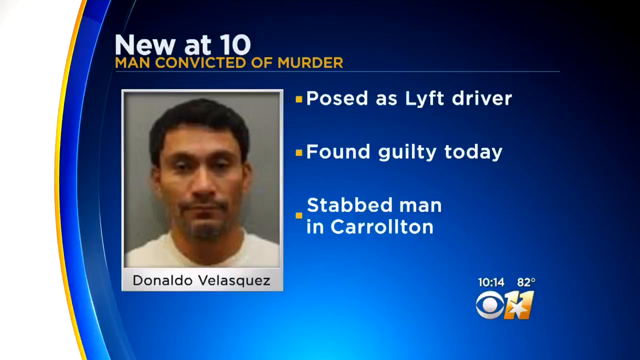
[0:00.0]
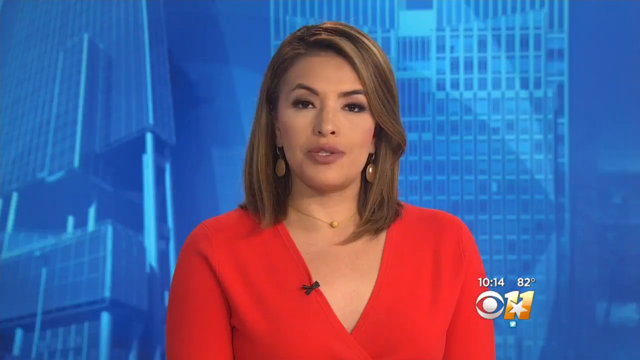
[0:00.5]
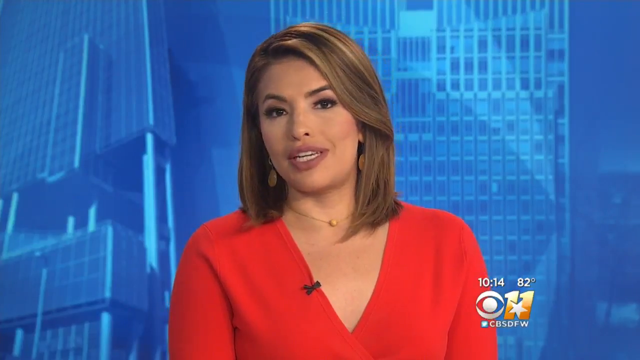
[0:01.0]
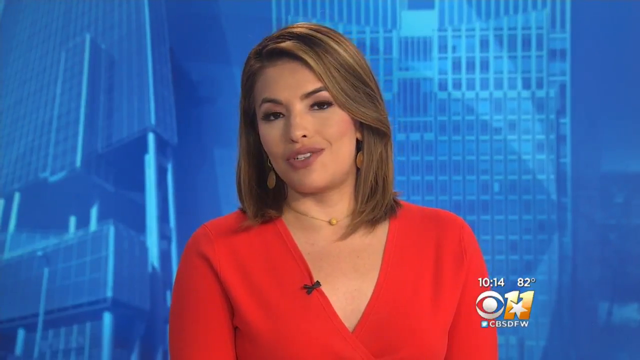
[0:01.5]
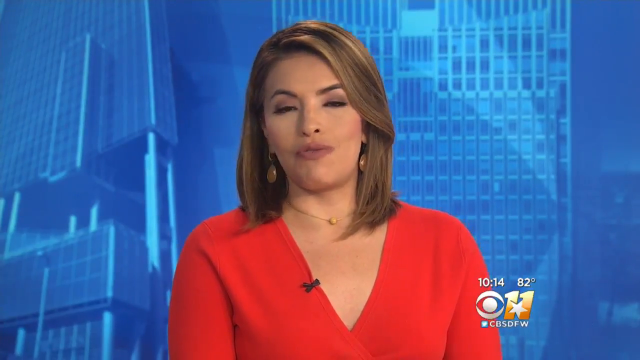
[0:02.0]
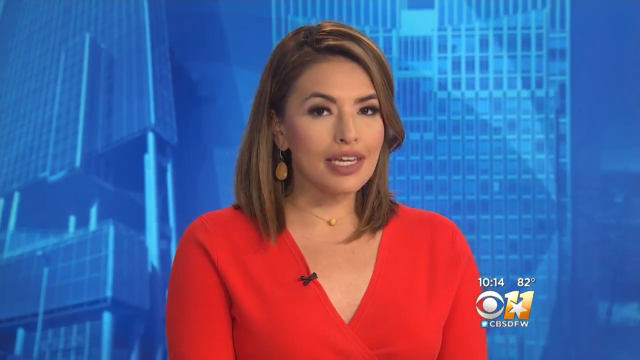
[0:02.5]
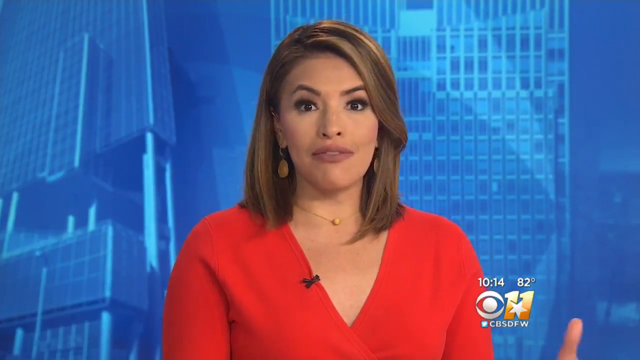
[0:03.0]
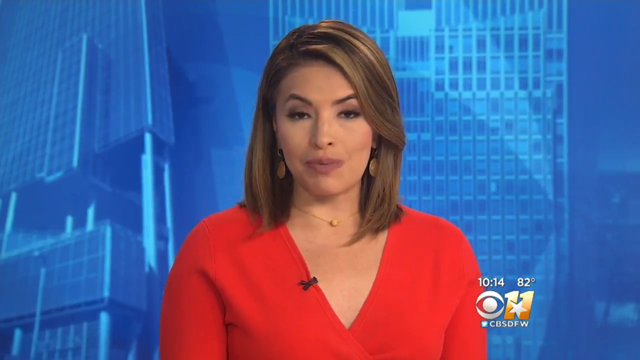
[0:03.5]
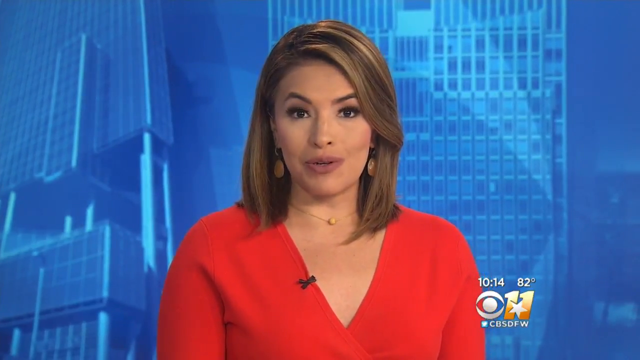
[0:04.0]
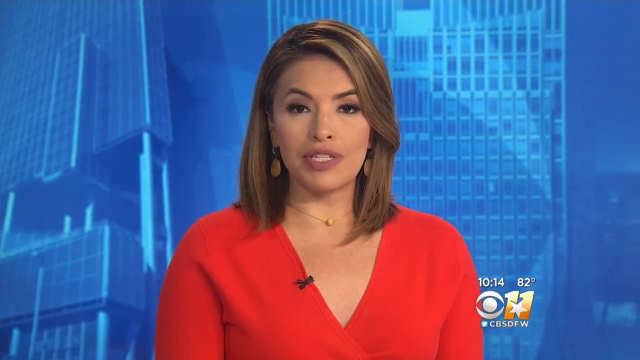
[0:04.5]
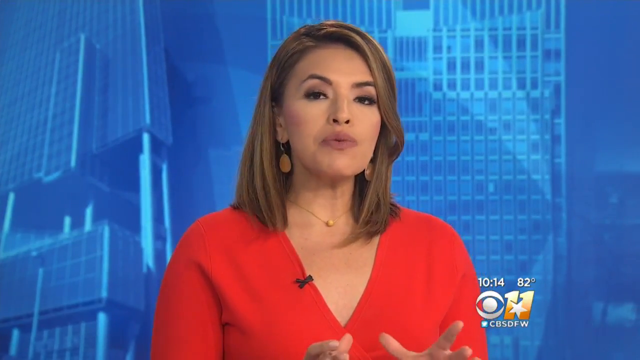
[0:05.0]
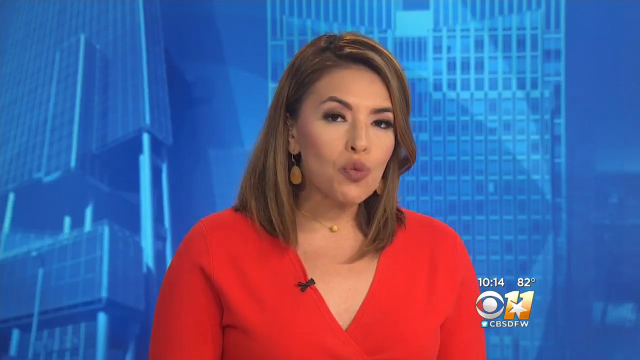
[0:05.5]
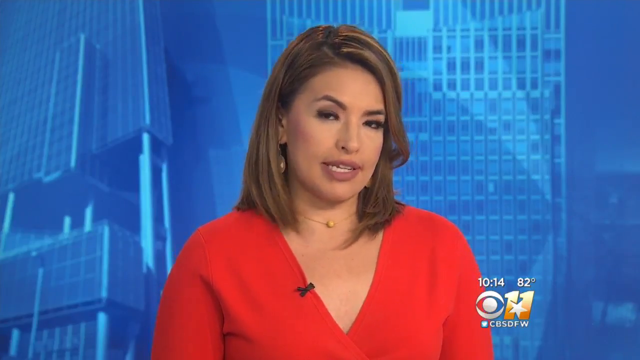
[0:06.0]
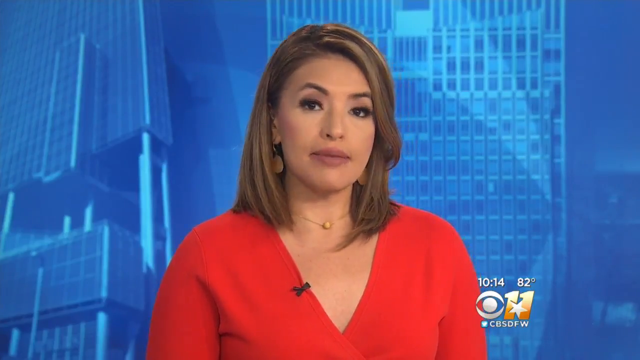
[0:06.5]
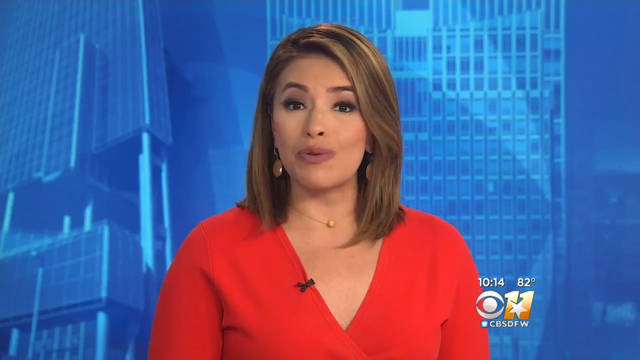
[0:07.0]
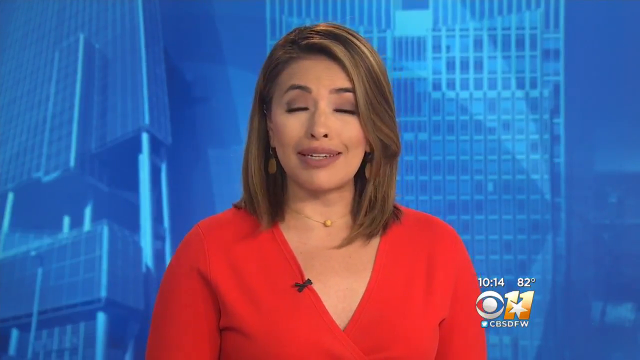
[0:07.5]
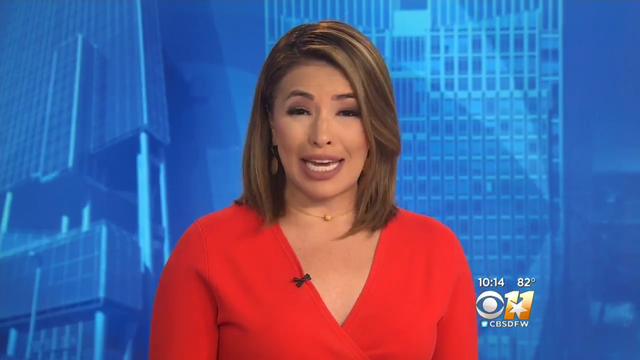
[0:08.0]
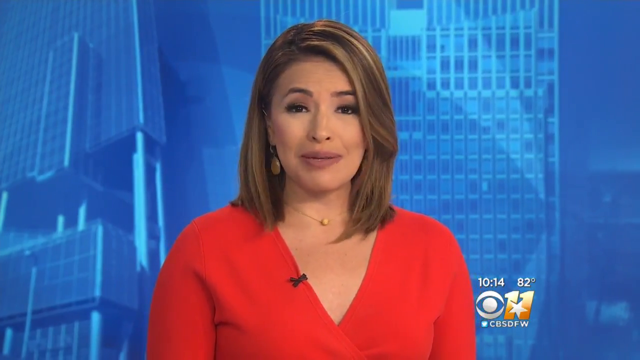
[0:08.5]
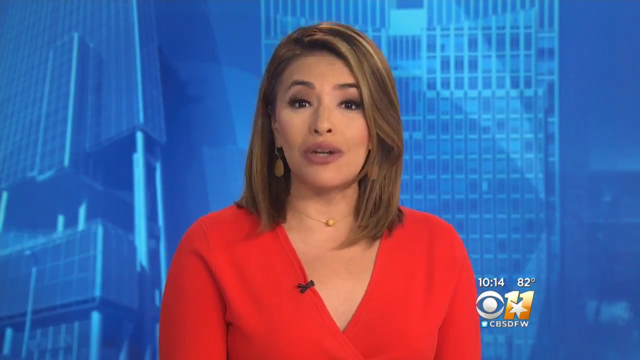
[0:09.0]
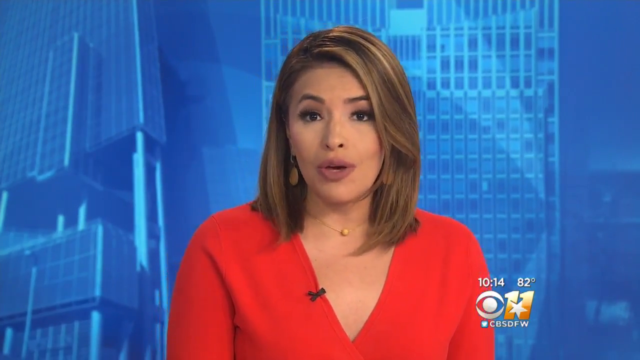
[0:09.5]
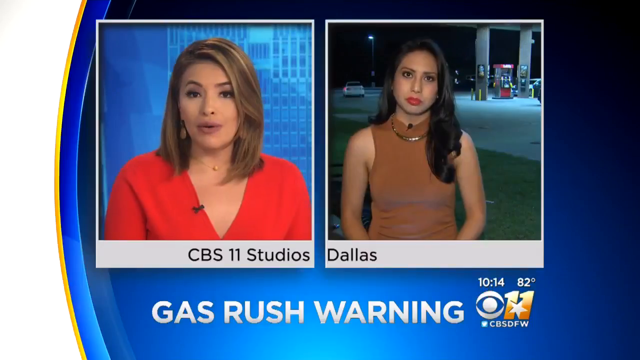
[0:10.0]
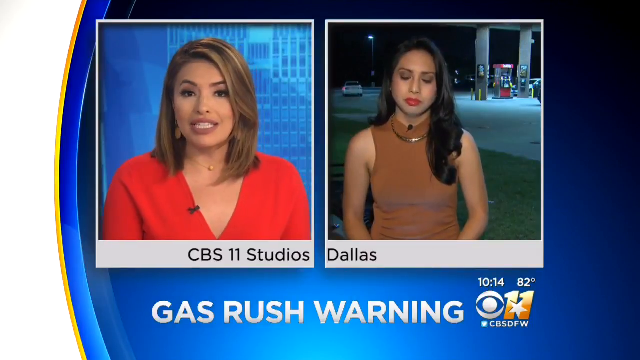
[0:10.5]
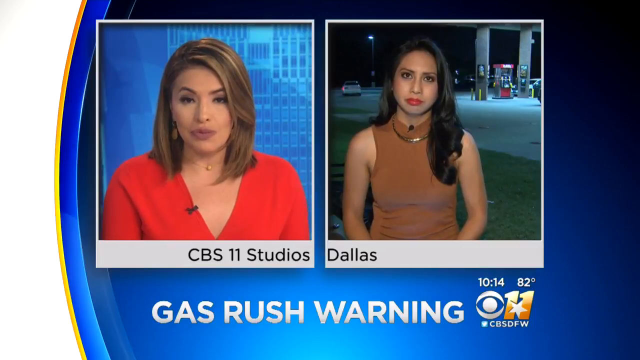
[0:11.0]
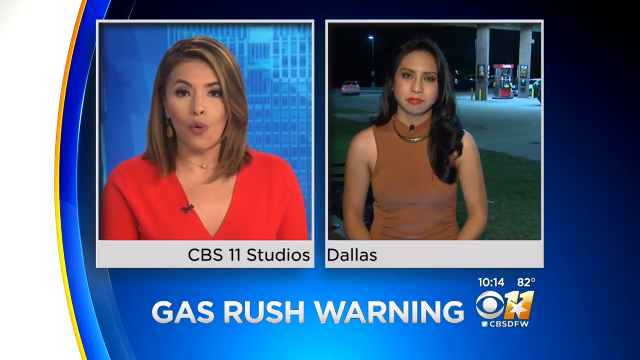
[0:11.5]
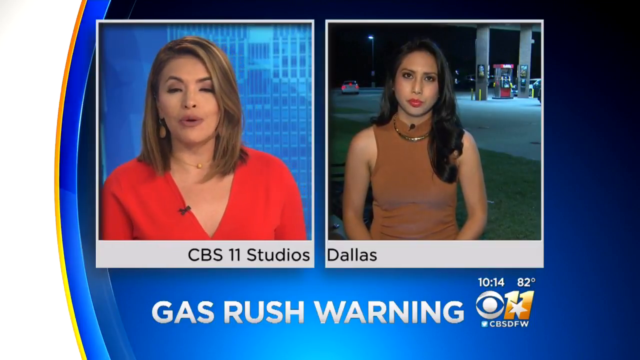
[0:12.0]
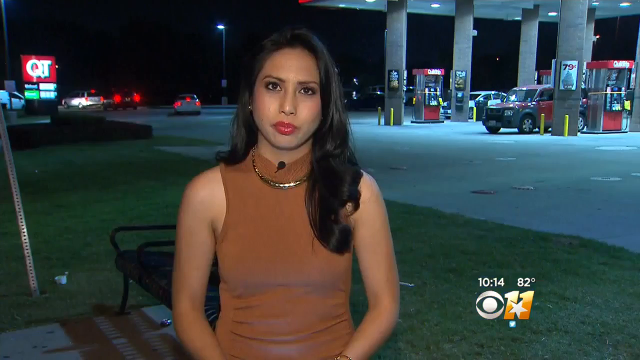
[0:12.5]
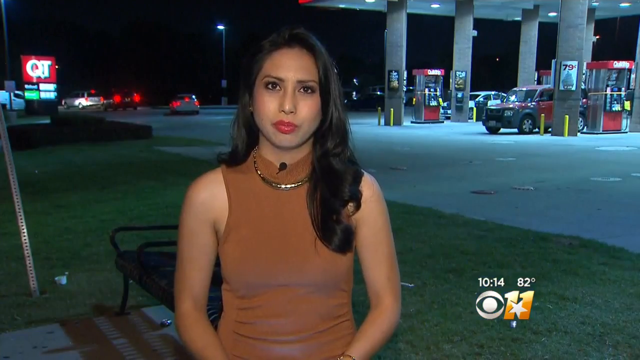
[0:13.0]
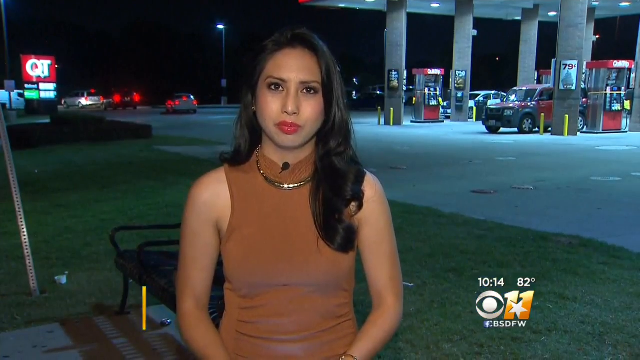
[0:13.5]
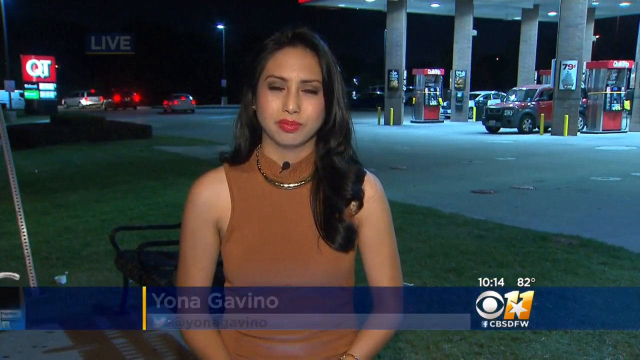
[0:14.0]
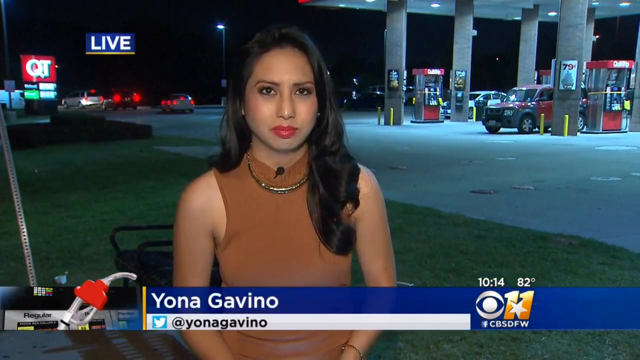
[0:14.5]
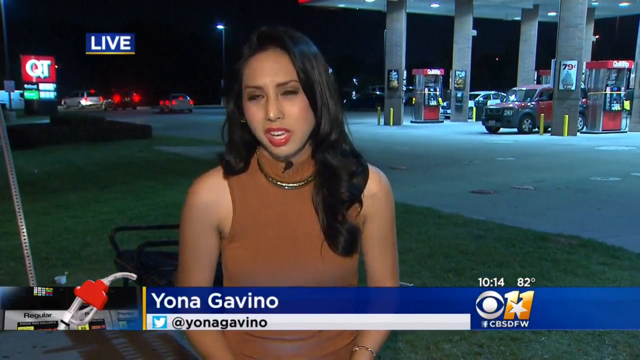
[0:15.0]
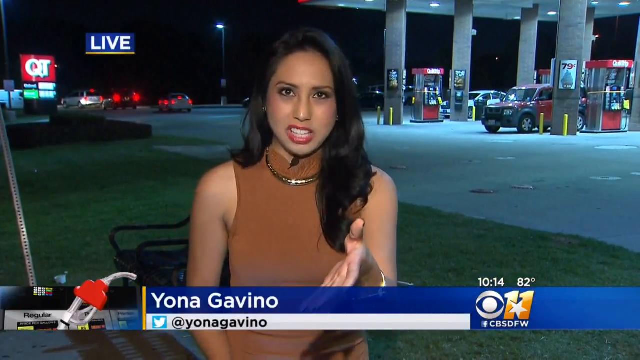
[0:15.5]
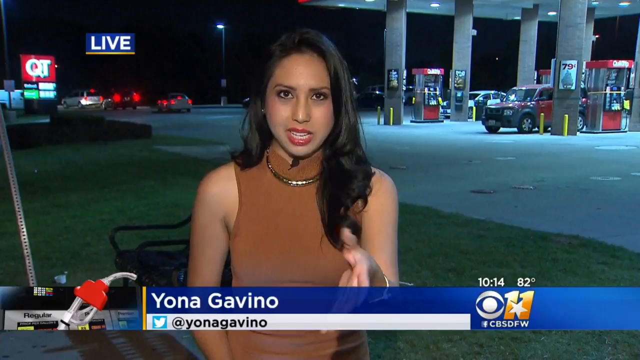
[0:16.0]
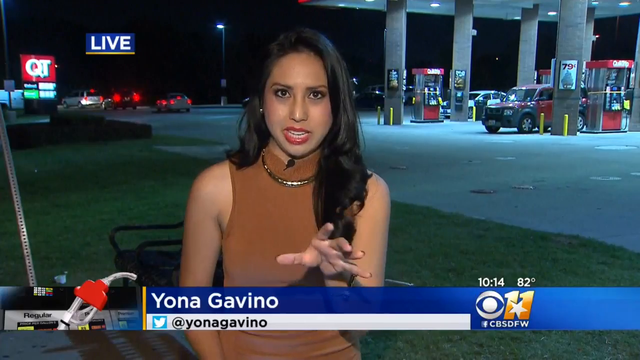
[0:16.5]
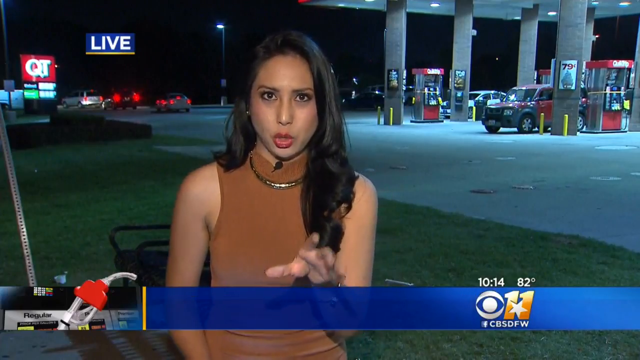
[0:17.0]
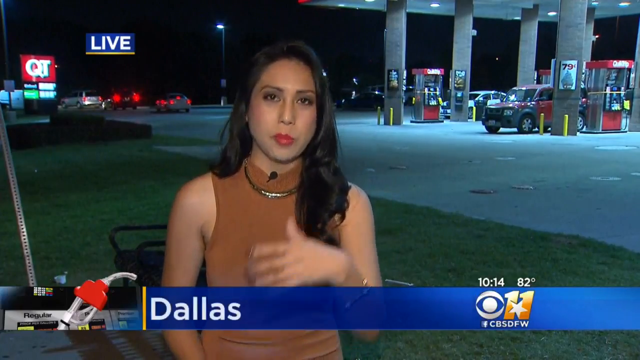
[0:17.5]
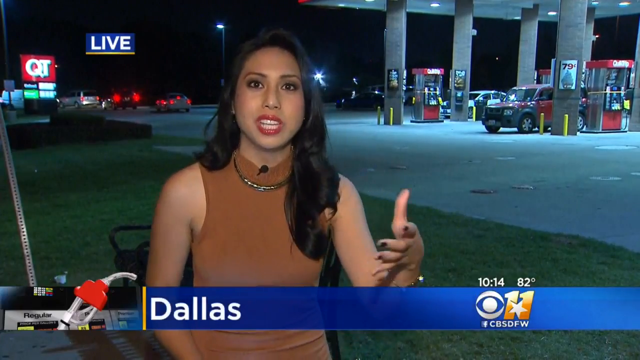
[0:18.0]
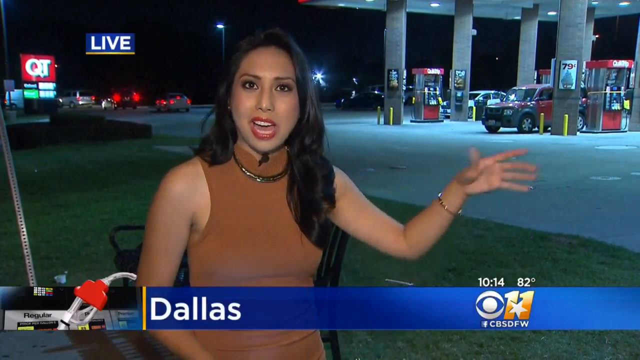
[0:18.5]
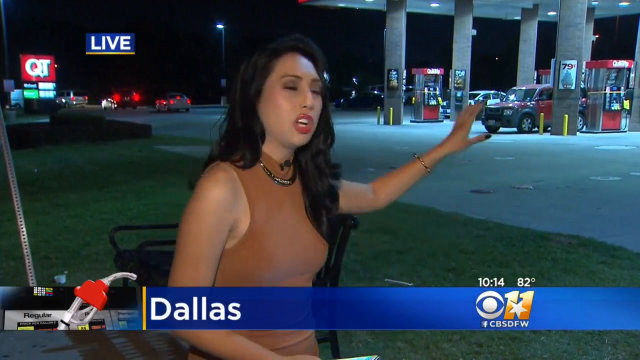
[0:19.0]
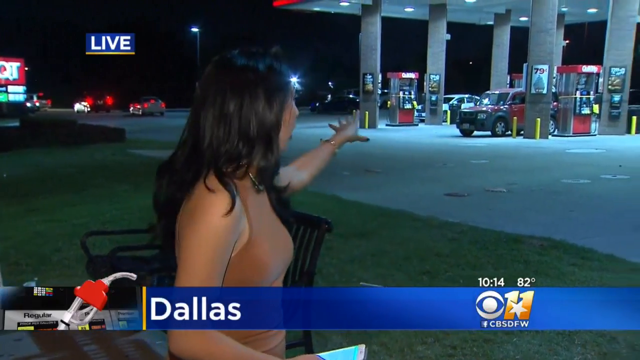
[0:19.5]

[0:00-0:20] A caption at the top of the screen reads "new at 10," and below it, "man convicted of murder." Under this caption is a picture of a man named Donaldo Velasquez, who looks Hispanic, with slightly brown skin and short dark hair. To the right of his mugshot are bullet points, one under another: "Post as Lyft driver," "found guilty today," and "stabbed man in Carrollton." A CBS 11 logo is in the bottom right-hand corner of the screen. The video then transitions to a Hispanic-looking woman with medium brown hair in a red top, sitting at a news desk and speaking while looking at the camera. A split screen then shows another Hispanic reporter reporting live from a gas station in Dallas. The screen centers on the reporter at the gas station, showing her name, Yana Gavino, and she starts speaking into the camera and gesturing with her hands.